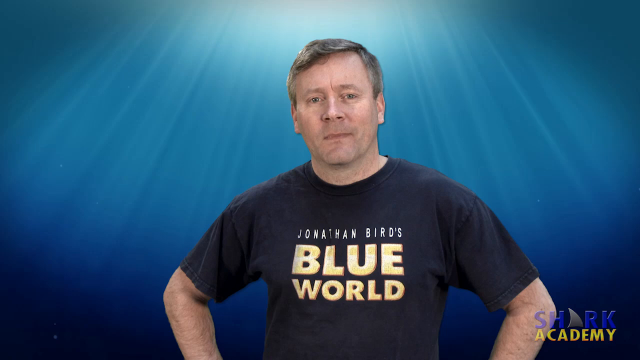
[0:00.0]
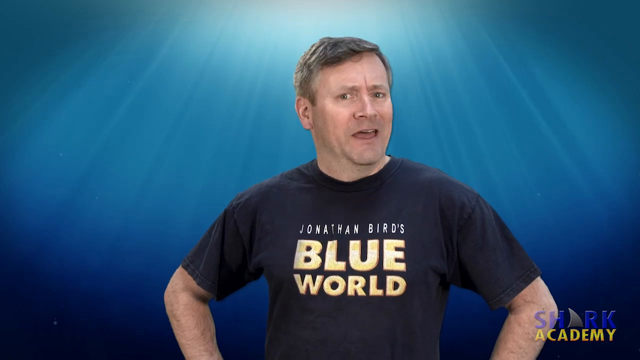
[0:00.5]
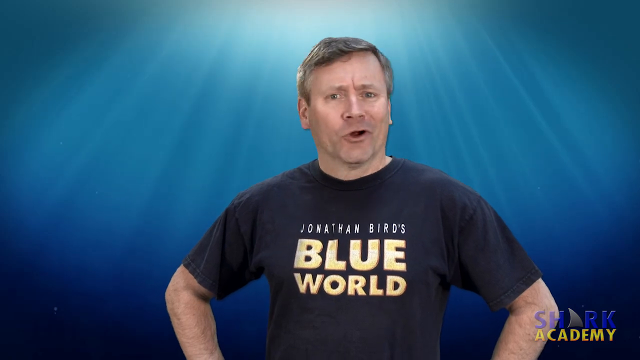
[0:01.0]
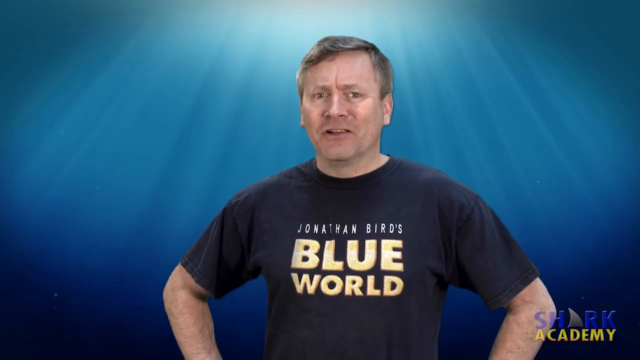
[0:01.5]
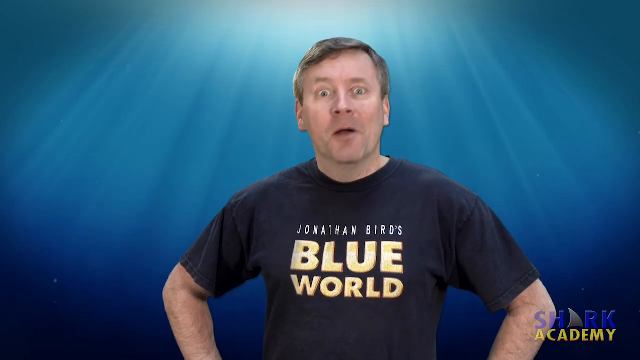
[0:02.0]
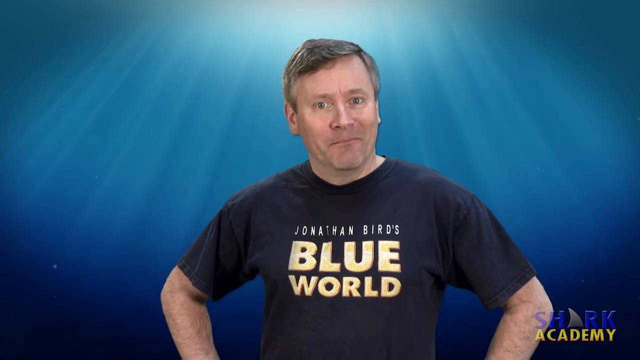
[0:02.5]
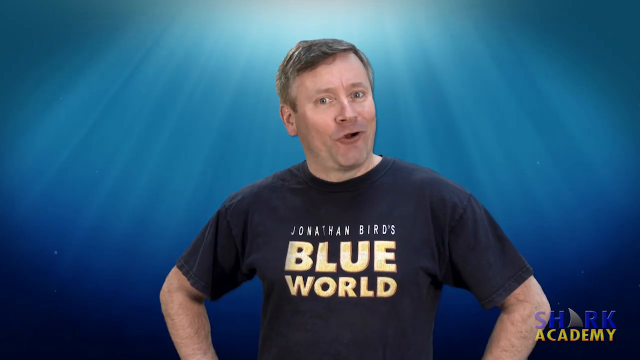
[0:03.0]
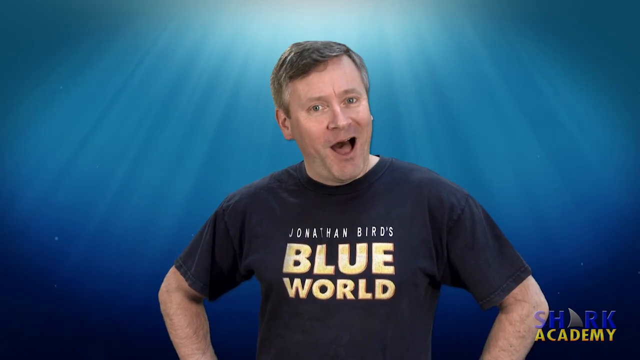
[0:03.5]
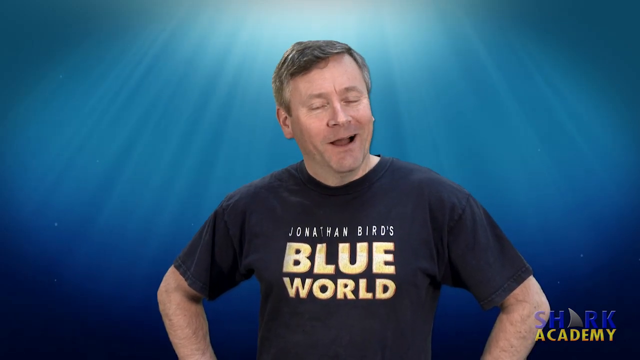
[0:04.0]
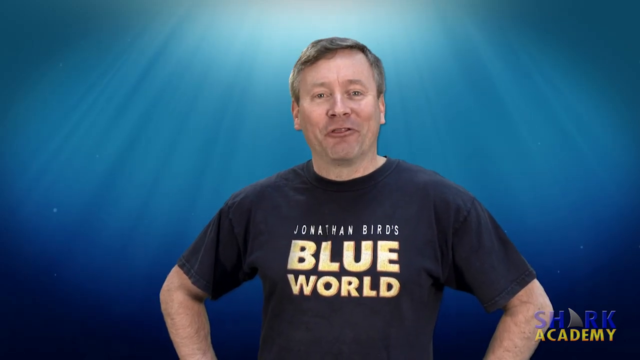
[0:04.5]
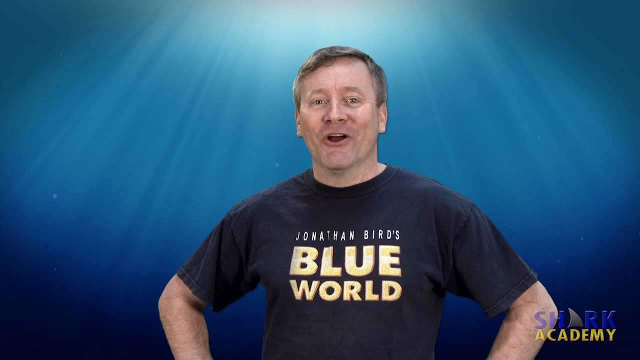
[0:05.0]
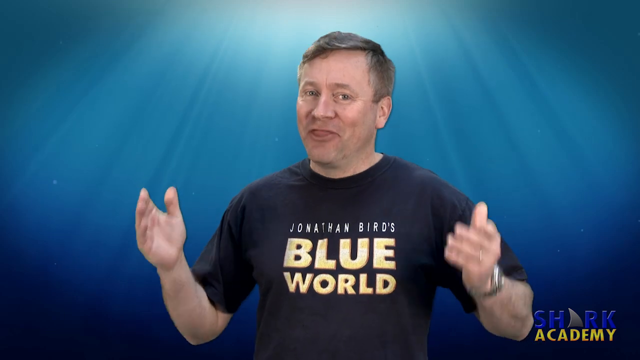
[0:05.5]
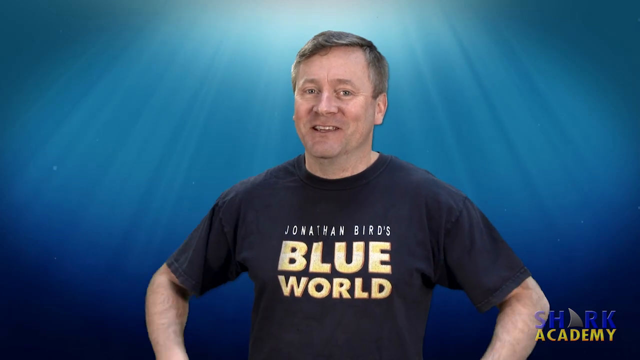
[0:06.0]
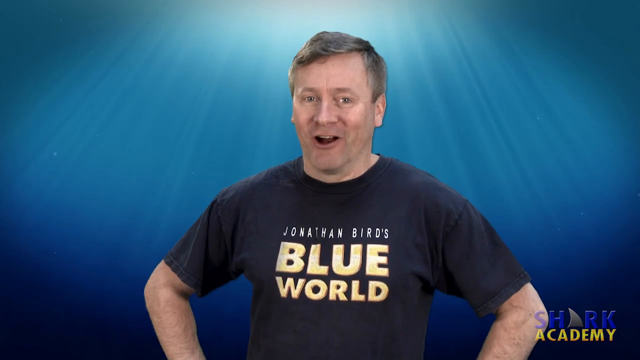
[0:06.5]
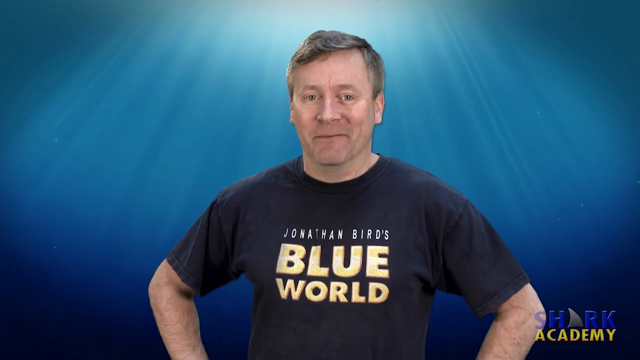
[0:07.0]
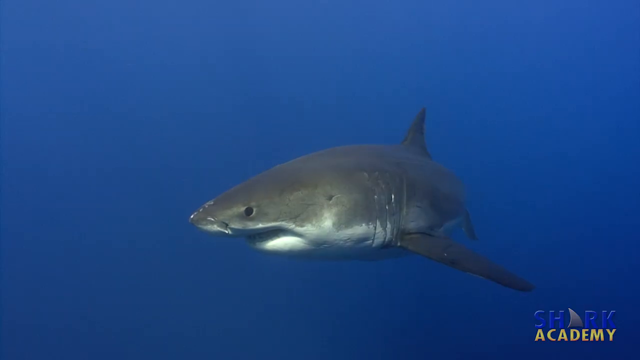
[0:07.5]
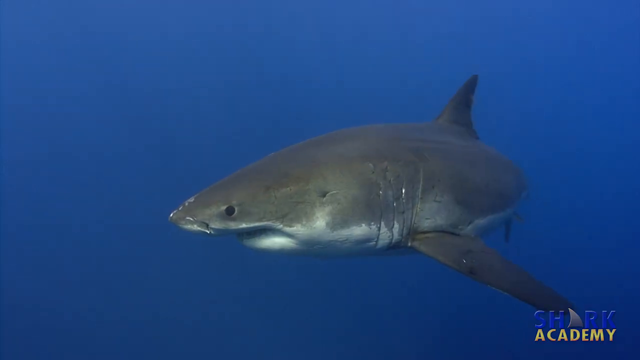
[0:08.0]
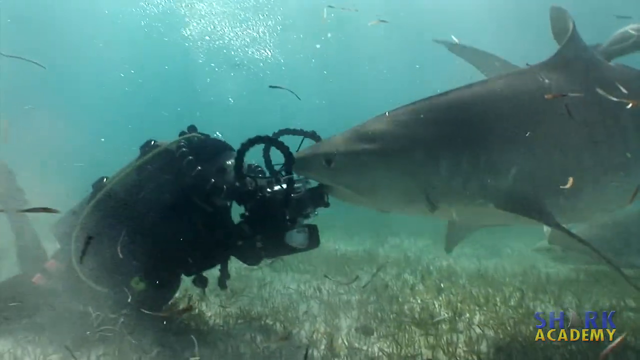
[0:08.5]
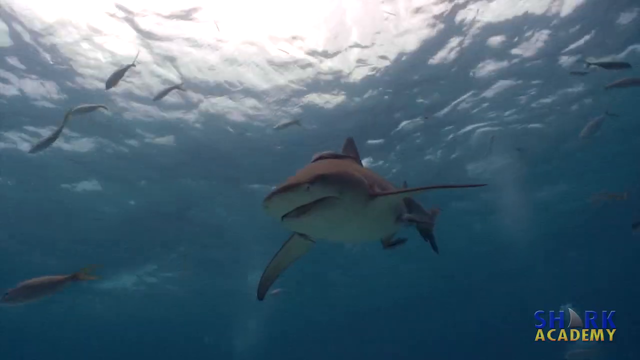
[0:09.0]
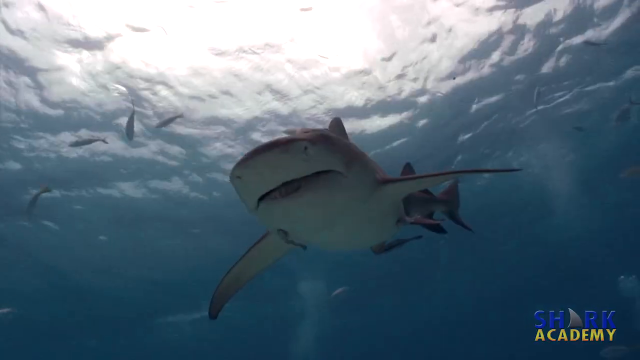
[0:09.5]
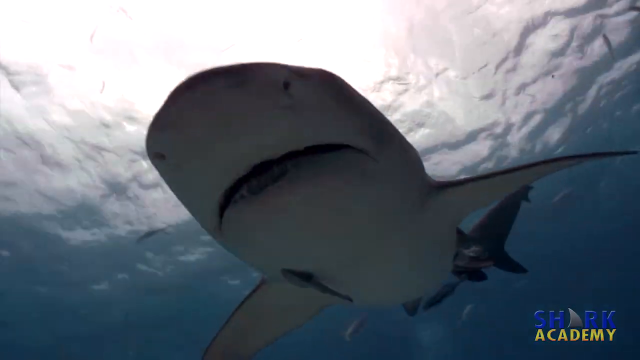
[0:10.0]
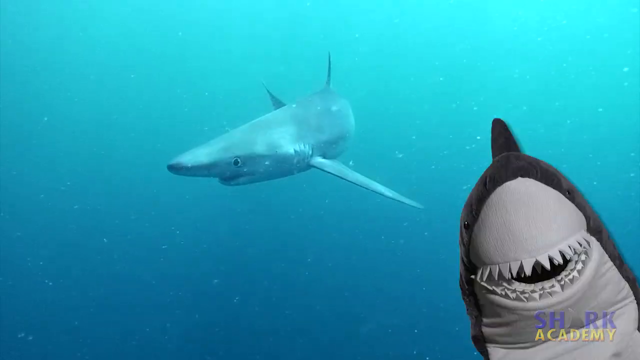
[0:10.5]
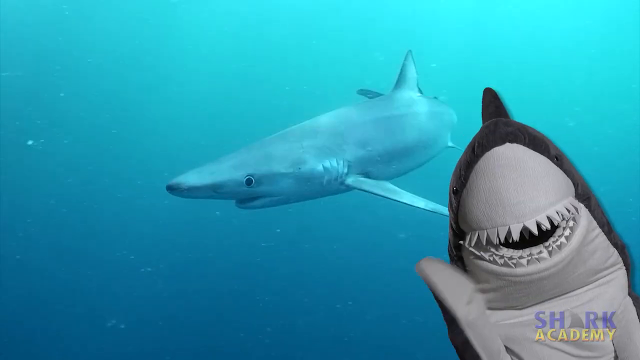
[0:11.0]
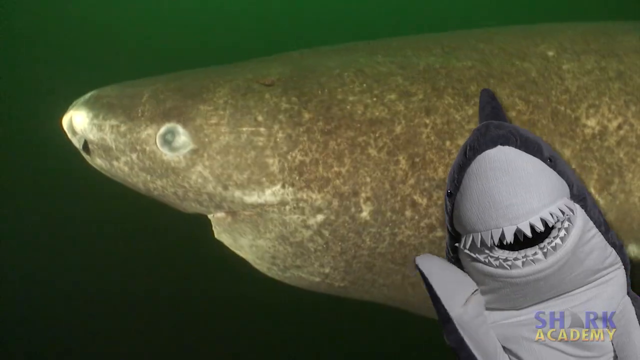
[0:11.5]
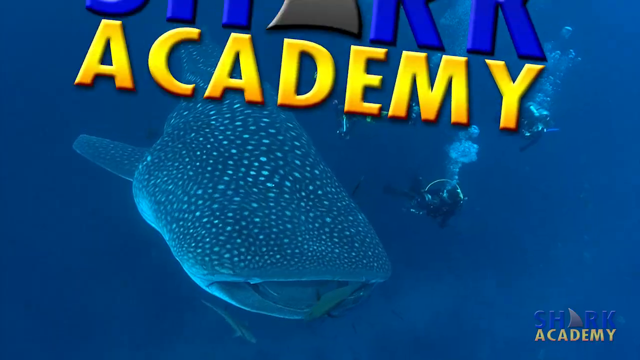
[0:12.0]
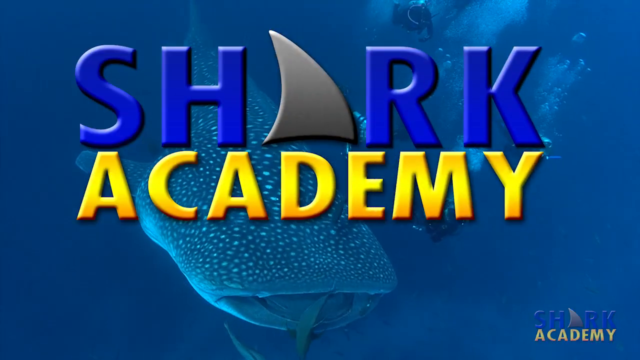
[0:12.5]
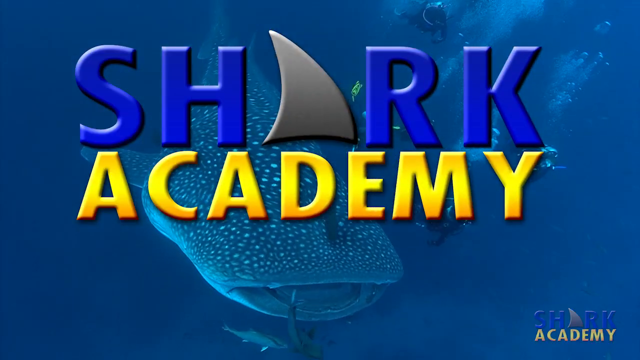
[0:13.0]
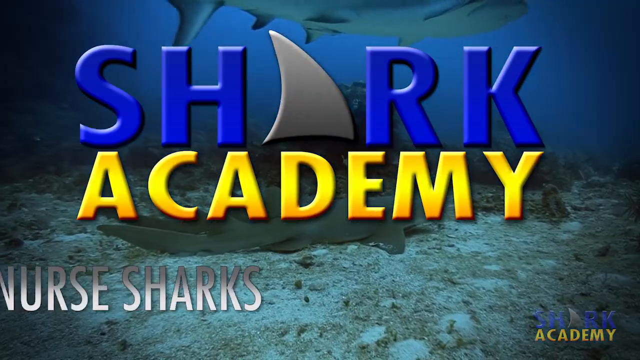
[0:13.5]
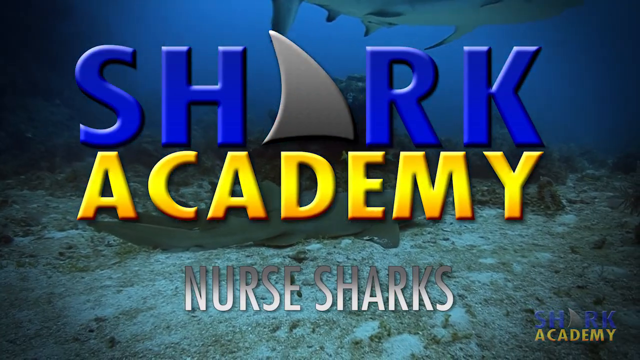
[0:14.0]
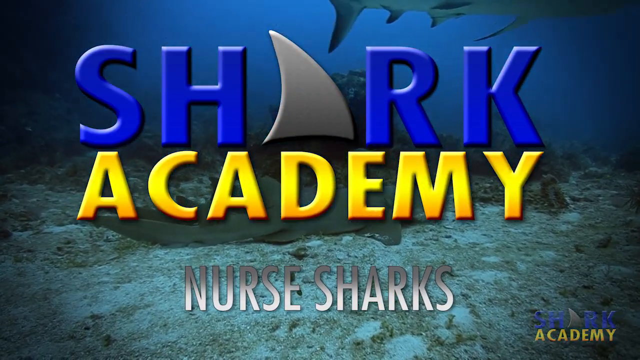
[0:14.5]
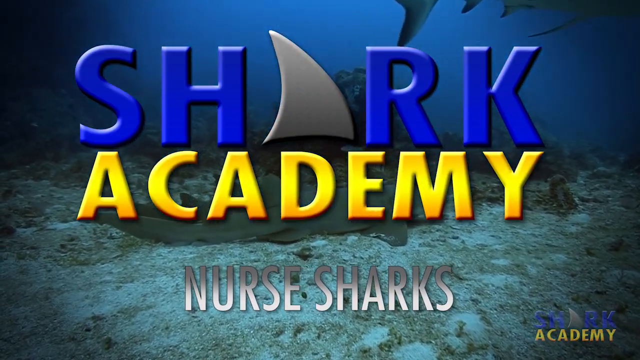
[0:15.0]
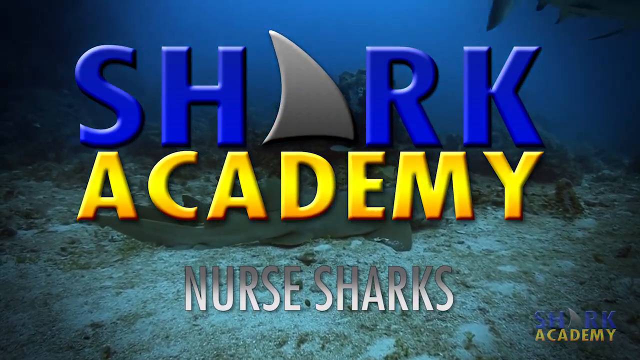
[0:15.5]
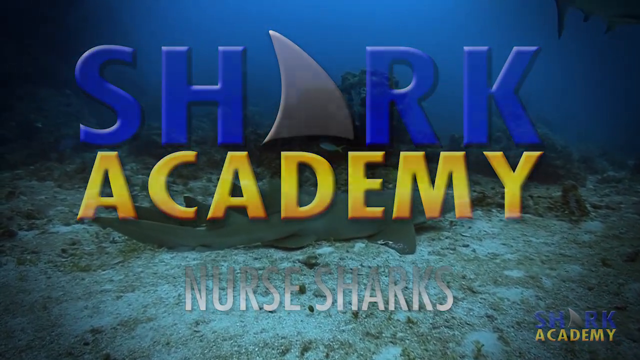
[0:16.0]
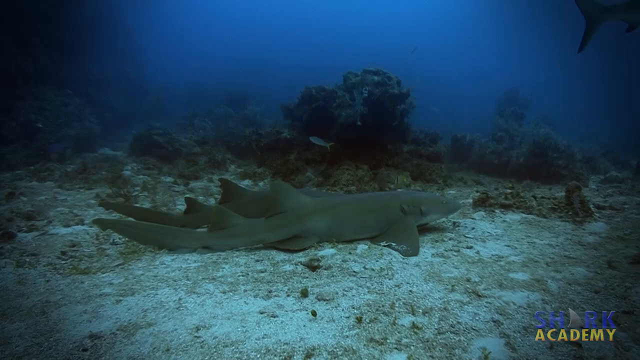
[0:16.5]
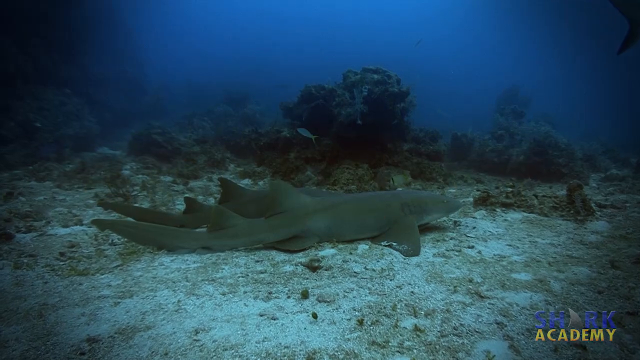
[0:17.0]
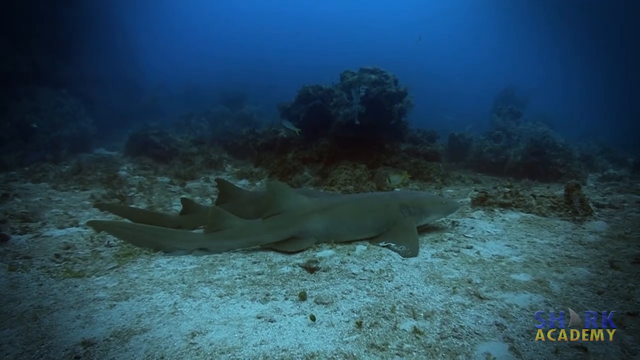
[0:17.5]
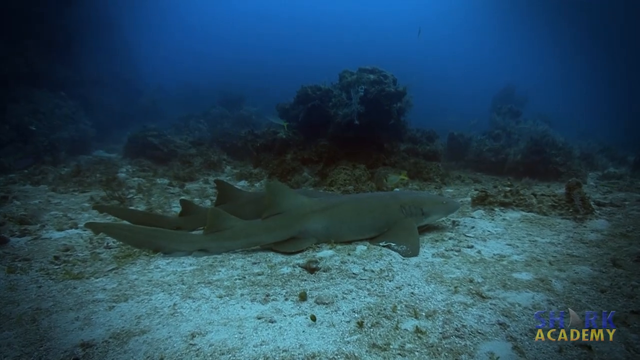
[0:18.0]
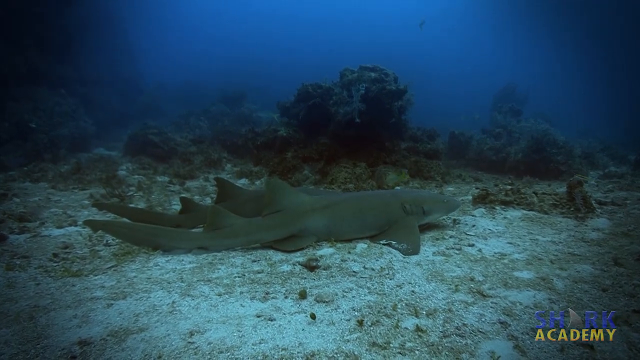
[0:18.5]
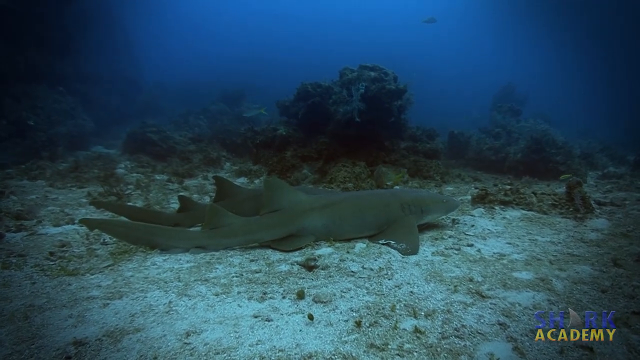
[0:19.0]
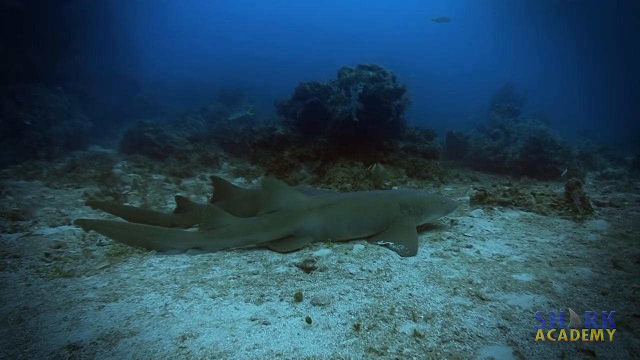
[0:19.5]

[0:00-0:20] A man wears a t-shirt that reads "Jonathan Bird's Blue World," and "Shark Academy" appears in the bottom right-hand corner. He talks briefly and seems happy. Pictures of great white sharks follow, along with a man filming underwater, and then another, unfamiliar kind of shark. Next comes a screen that says "Shark Academy," with "Nurse Sharks" at the bottom, showing a shark with two dorsal fins.